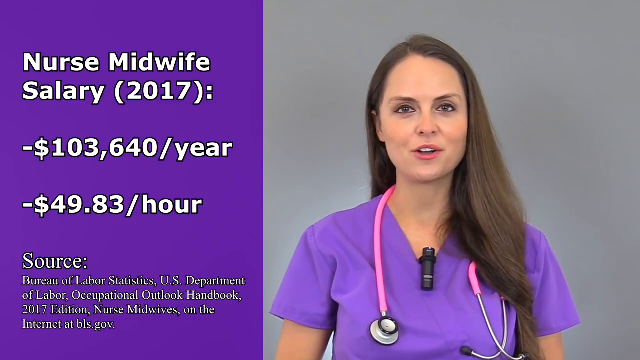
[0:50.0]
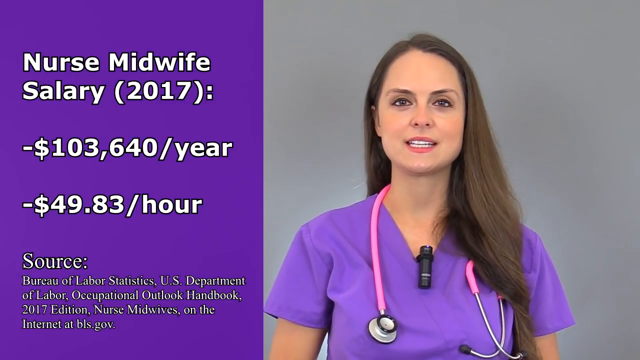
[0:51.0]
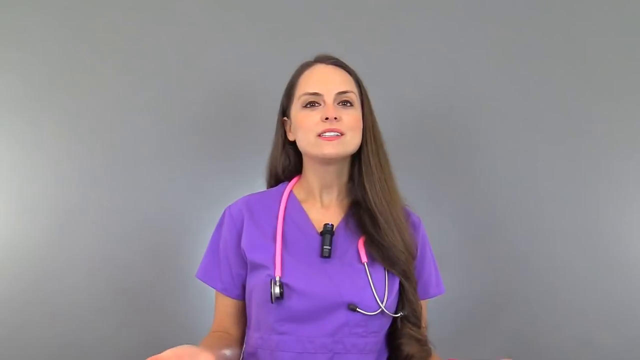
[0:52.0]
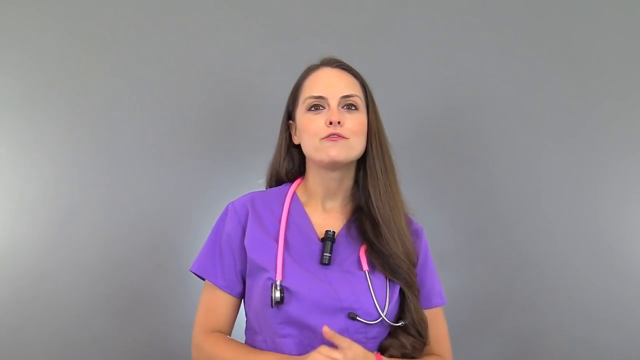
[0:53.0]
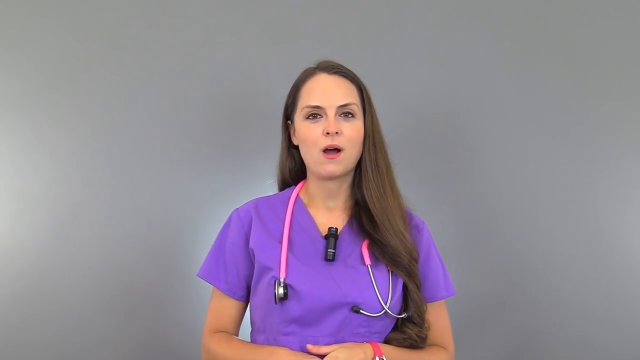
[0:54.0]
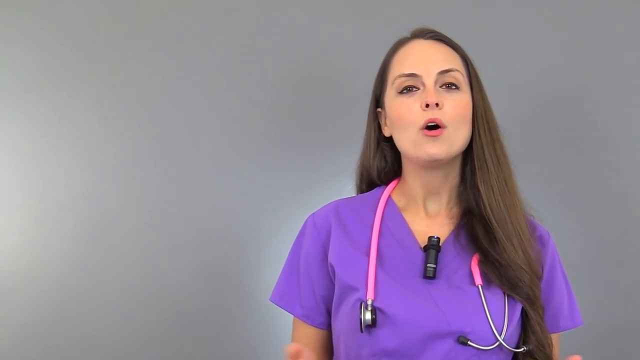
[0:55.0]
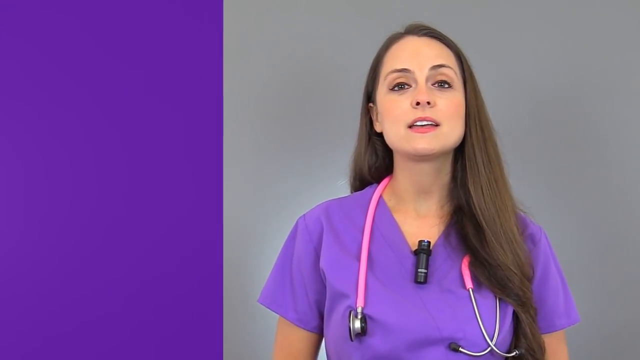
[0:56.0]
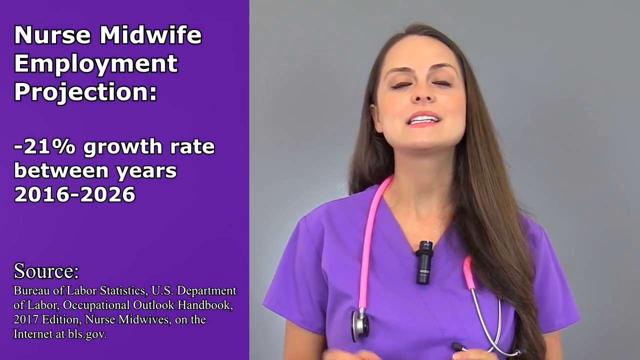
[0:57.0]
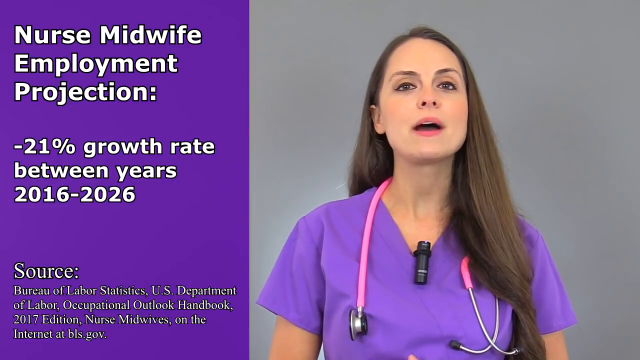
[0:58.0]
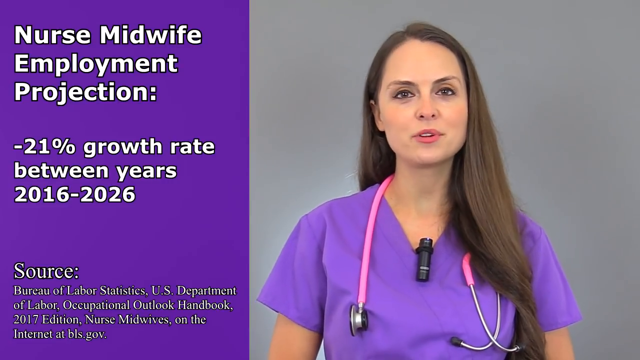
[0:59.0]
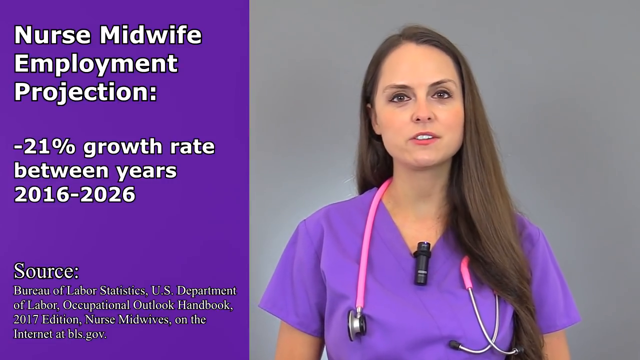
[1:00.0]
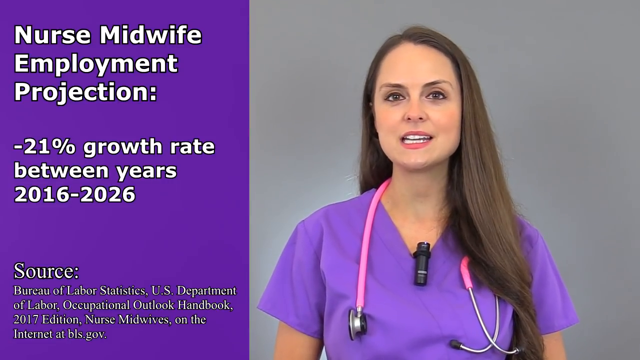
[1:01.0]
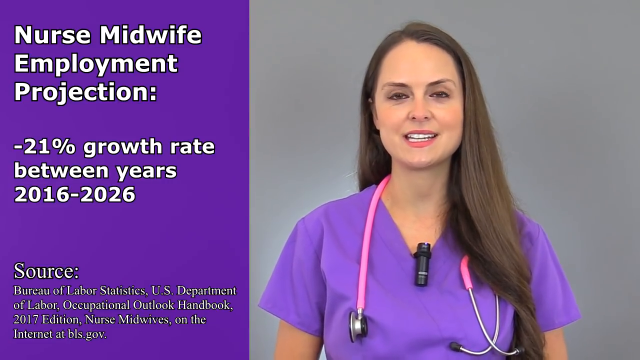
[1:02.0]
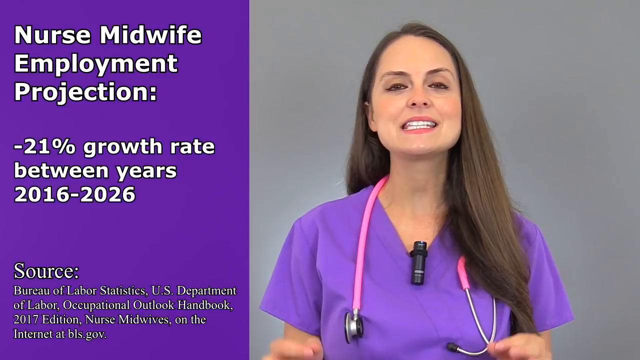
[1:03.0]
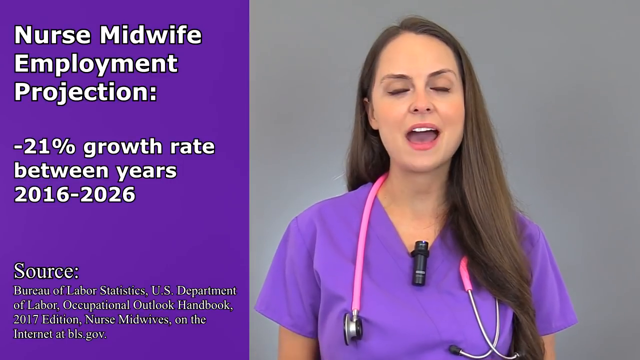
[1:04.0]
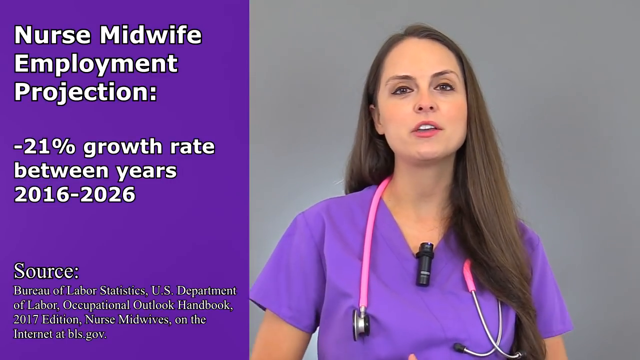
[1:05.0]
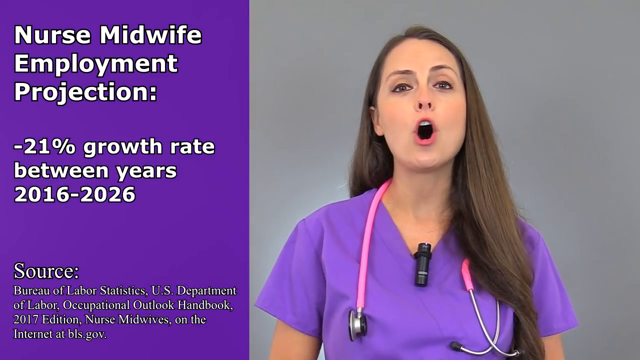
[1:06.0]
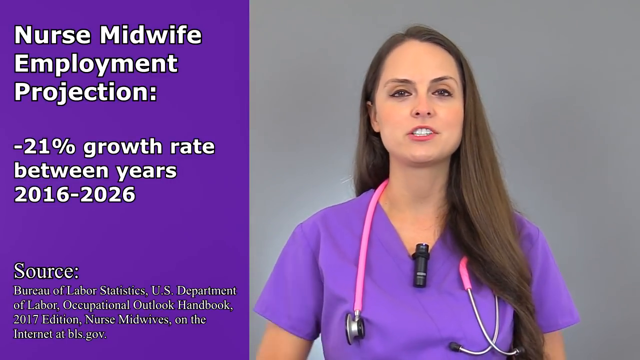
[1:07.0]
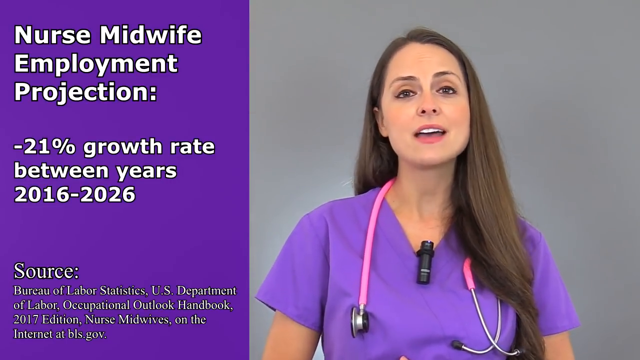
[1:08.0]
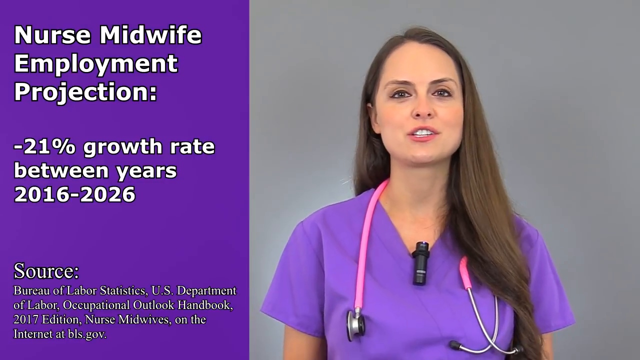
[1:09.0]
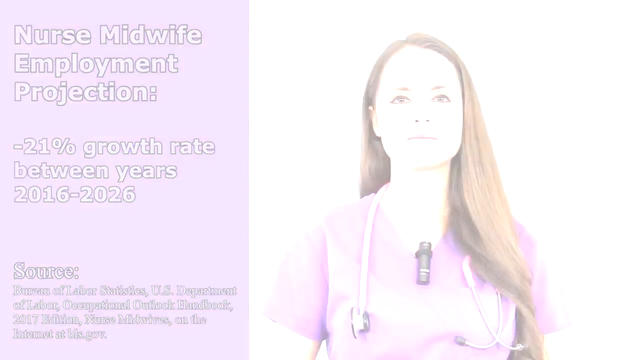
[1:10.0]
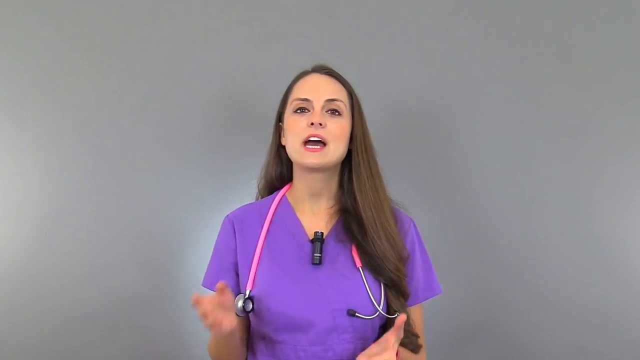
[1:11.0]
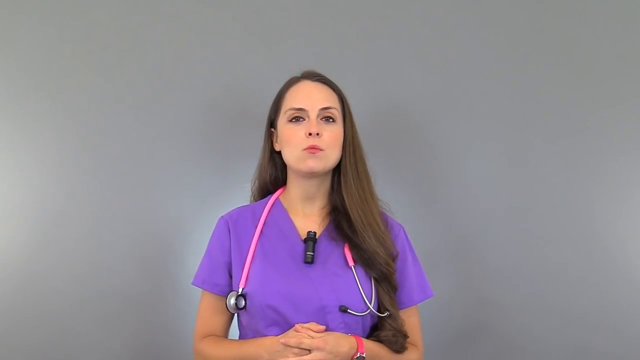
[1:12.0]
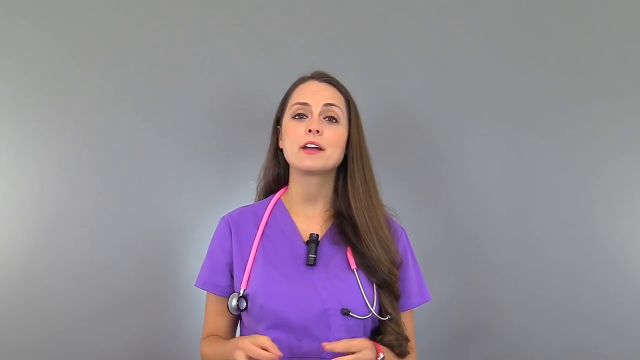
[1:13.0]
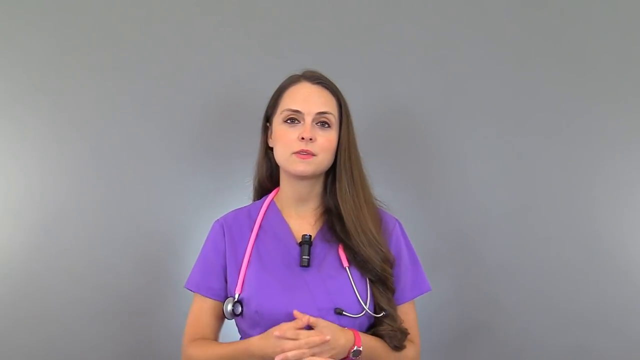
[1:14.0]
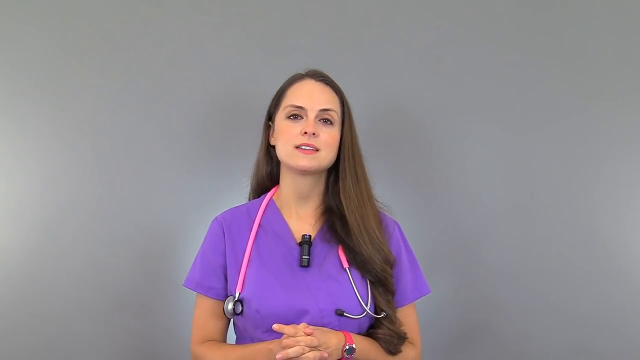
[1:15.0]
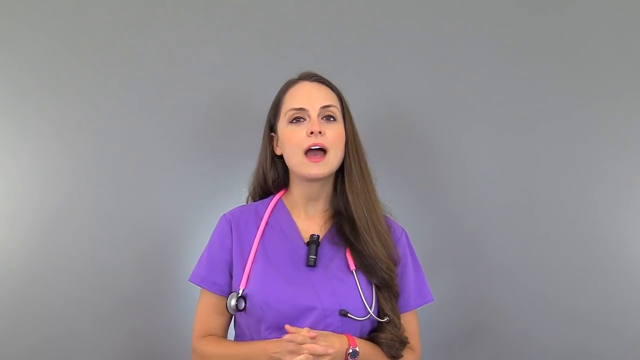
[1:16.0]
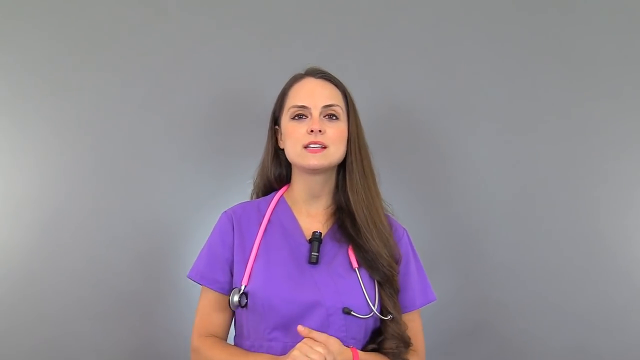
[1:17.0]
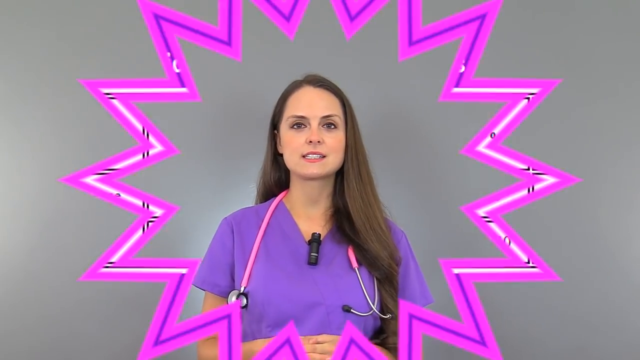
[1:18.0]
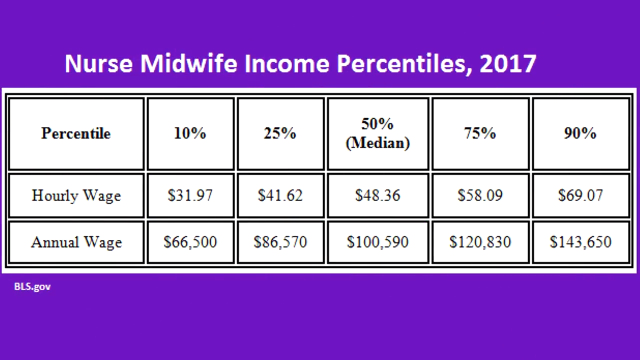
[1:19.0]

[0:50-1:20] The nurse, in a purple scrub top with a pink stethoscope around her neck, speaks to the camera on the right side of the screen, while on the left a purple page shows the nurse midwife salary for 2017. The screen flashes and the nurse fills the full screen, standing in front of a solid gray background and speaking toward the camera. She moves up and to the right, and a purple screen appears on the left reading "nurse midwife employment projection," with one bullet point beneath it: "21 percent growth rate between years 2016 and 2026." At the bottom is the source, which includes the Bureau of Labor Statistics, U.S. Department of Labor, Occupational Outlook Handbook. The nurse continues to speak toward the camera, then the screen flashes back to a full screen of her speaking. Next comes a new screen with a purple background and a white title at the top reading "Nurse Midwife Income Percentiles 2017." Below is a graph or chart with percentiles across the top (10%, 25%, 50% median, 75% and 90%) and, down the left side, hourly wage and annual wage. The 10% column shows $31.97 an hour and $66,500 a year; 25% shows $41.62 and $86,570; the median, 50%, shows $48.36 and $100,590; 75% shows $58.09 an hour and $120,830; and 90% shows $69.07 an hour and $143,650.